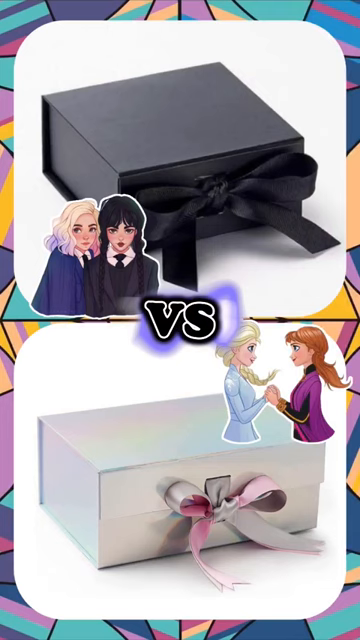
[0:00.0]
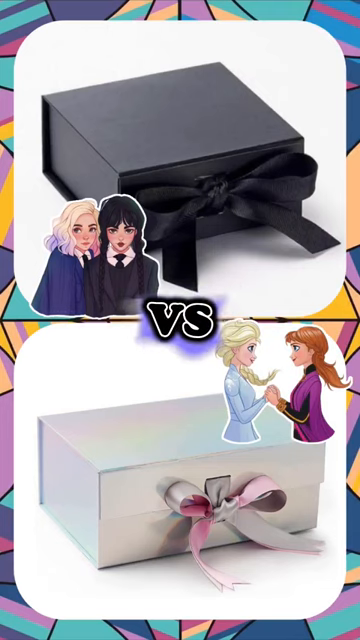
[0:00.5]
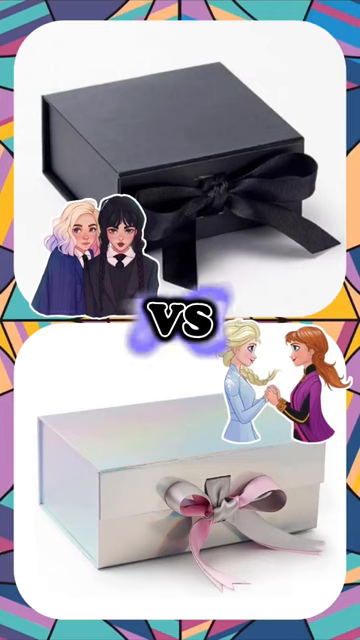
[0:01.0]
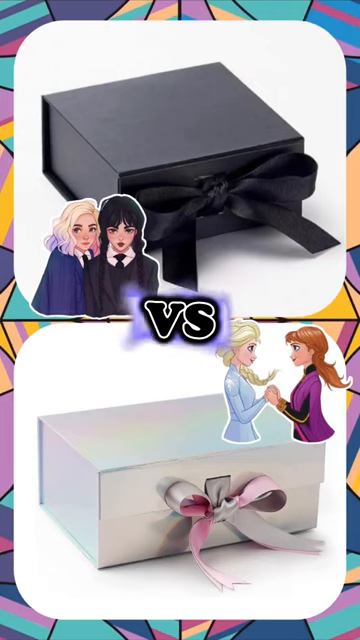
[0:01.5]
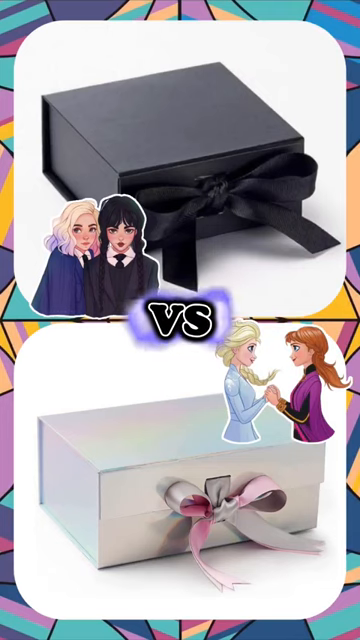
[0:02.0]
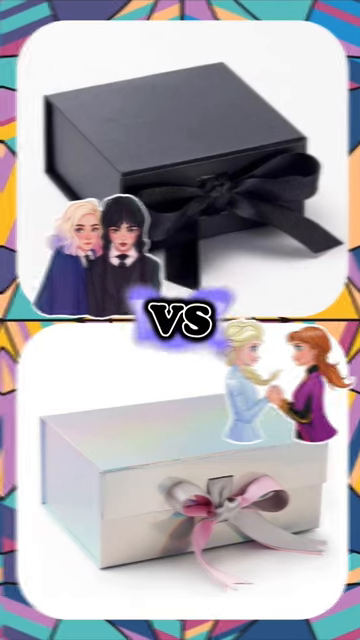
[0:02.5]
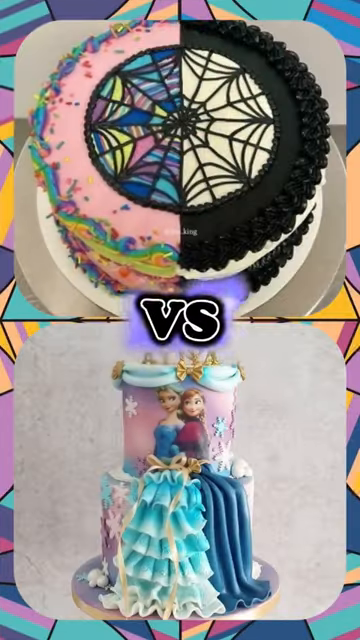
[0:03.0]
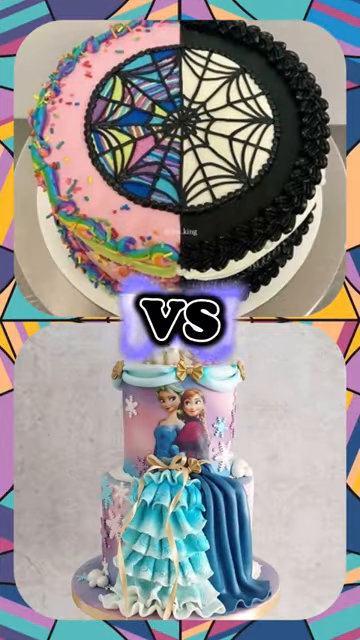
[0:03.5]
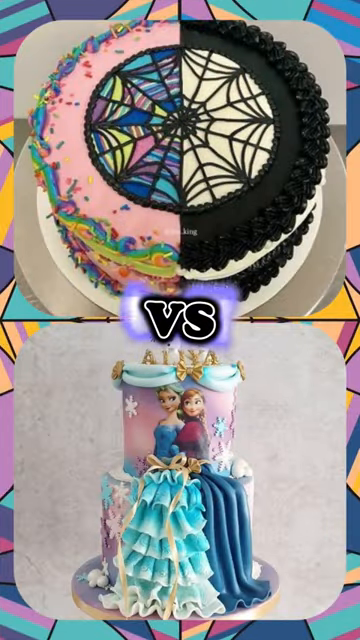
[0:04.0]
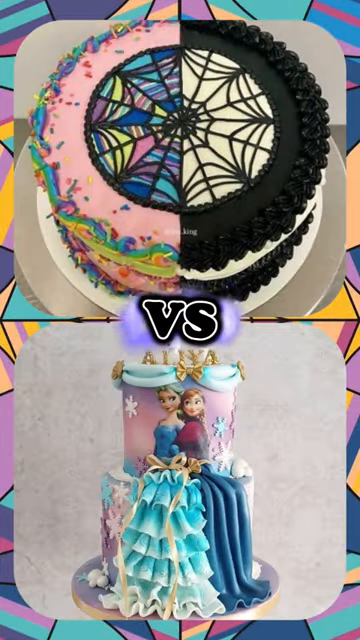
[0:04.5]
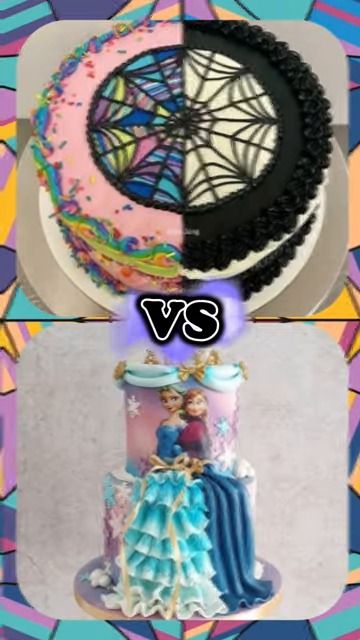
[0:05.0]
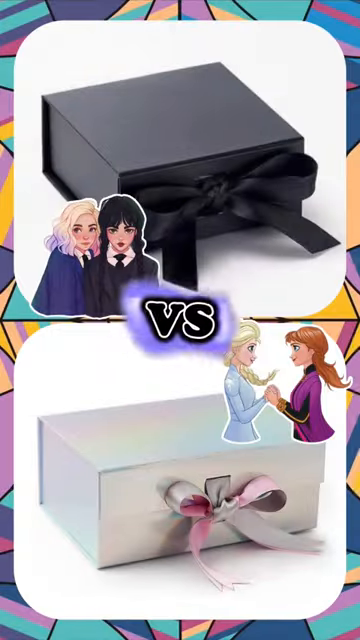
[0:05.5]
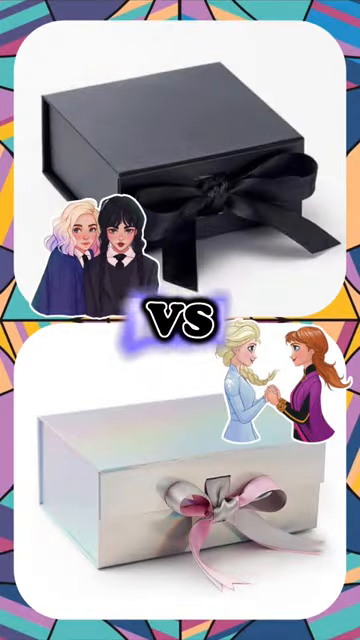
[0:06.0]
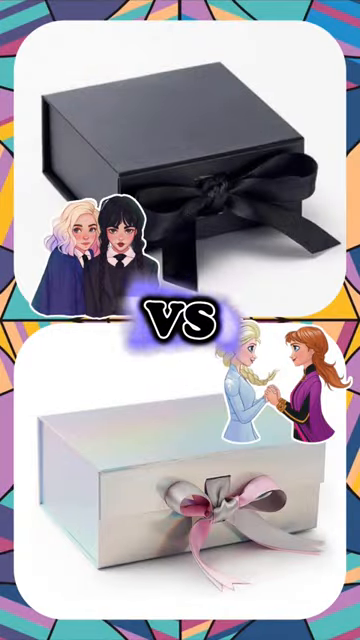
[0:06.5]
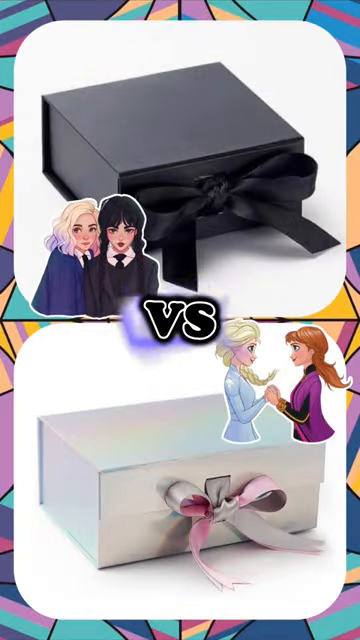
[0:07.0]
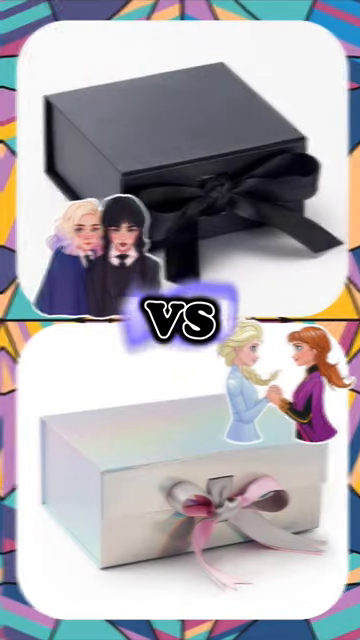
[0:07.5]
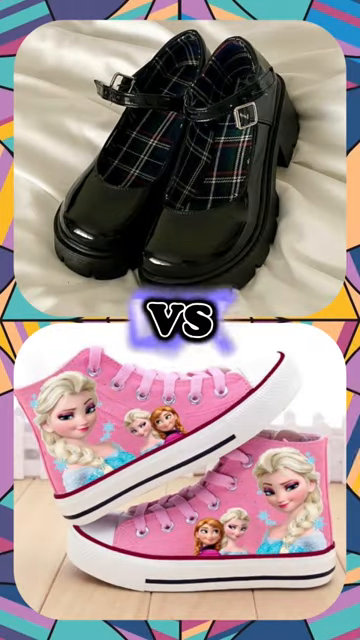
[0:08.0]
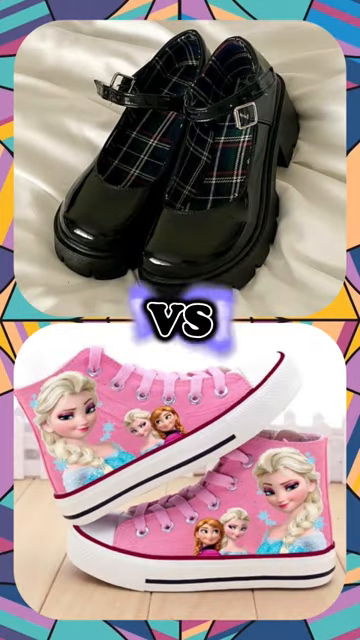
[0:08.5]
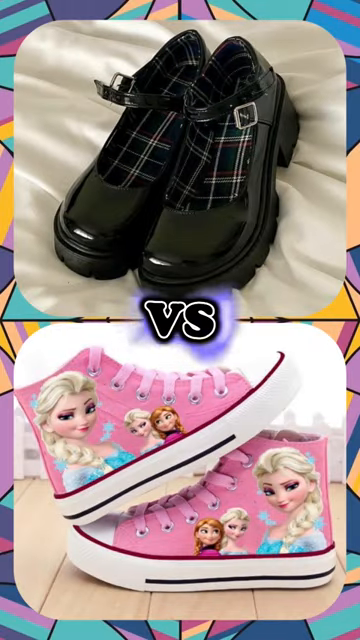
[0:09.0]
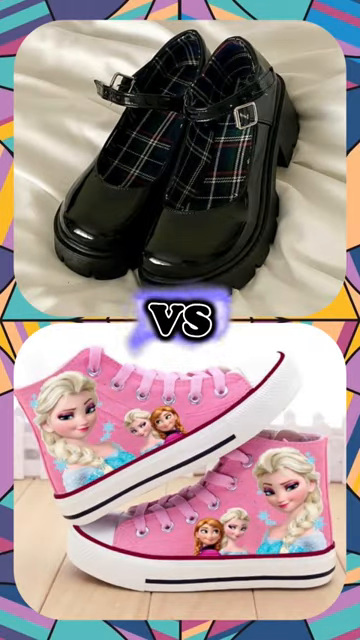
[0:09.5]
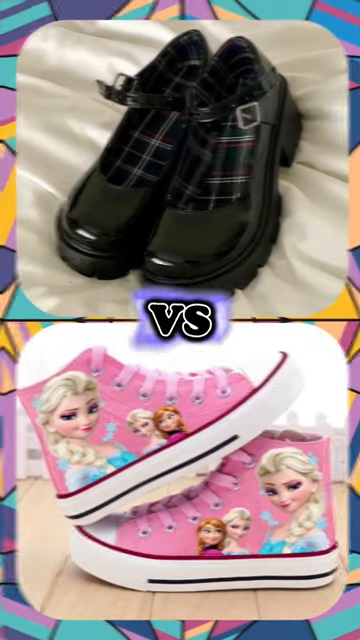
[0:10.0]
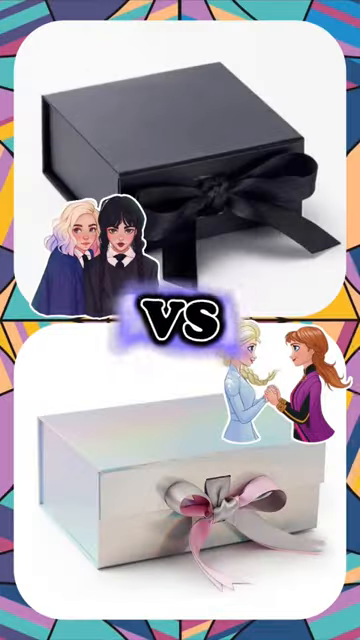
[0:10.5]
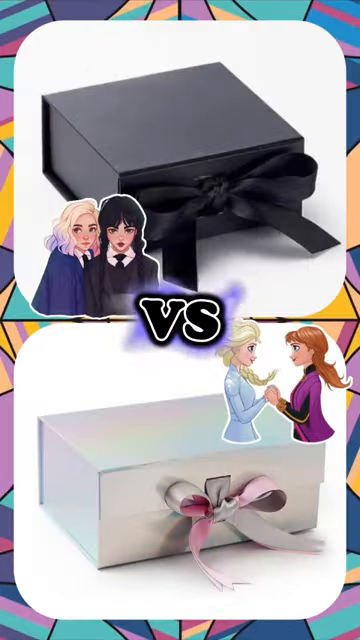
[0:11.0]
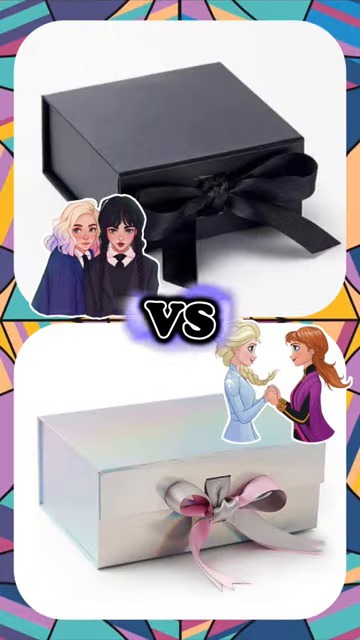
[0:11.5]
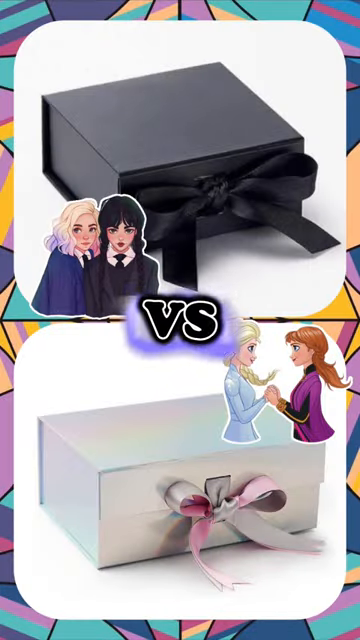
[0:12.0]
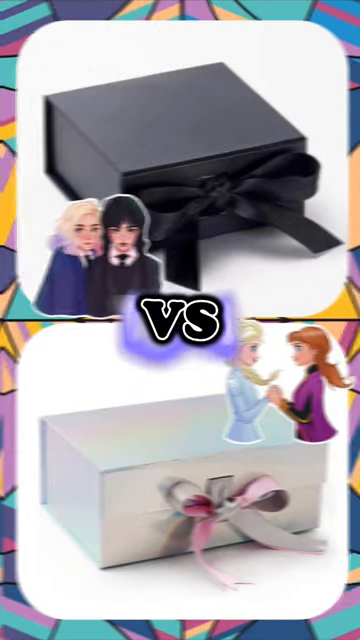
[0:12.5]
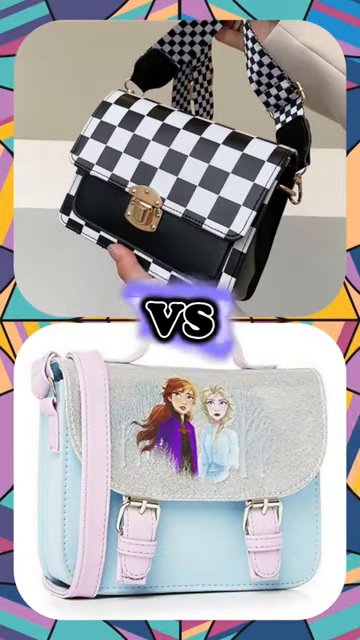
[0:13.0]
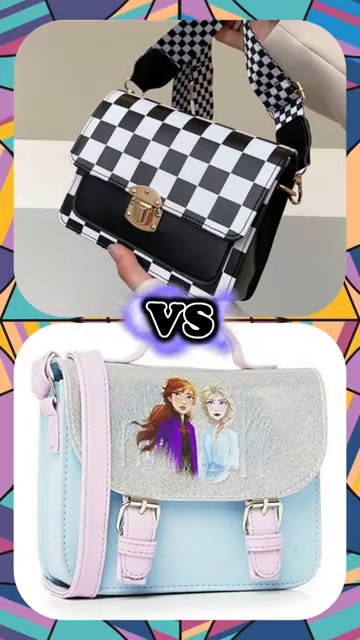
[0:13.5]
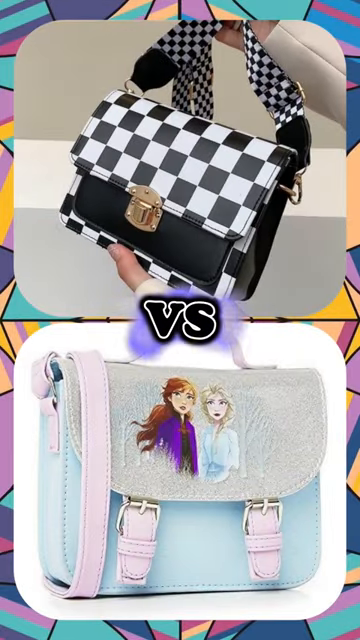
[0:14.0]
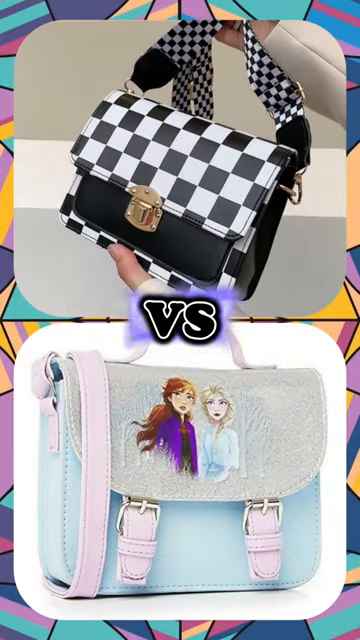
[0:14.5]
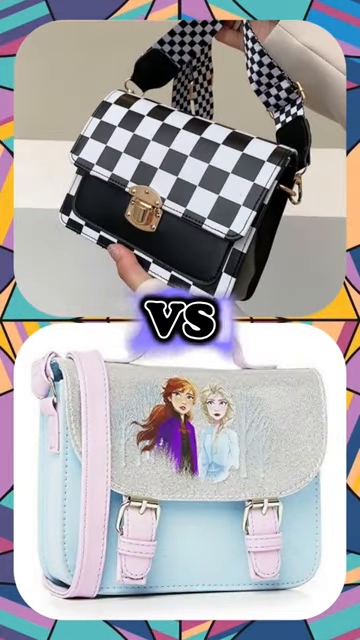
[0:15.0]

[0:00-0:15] The video appears to be some type of game in which two options are presented, one on top and one on the bottom, and the prize behind each option is then revealed. It starts with two images, one above the other: the top image appears to be a black gift box, while the image underneath appears to be a white gift box. The image then switches to show that the top box held a cake, half of it kind of rainbow-colored and half kind of a black and white spider web theme. Underneath is a large tiered cake with an Anna and Elsa from Frozen design on it. The video transitions back to the original images of the black gift box on top and the white gift box on the bottom. The next reveal shows a pair of black shiny Mary Jane shoes on top and a pair of pink Frozen-themed Converse shoes on the bottom. The default gift box images return, with the black gift on top and the white one on the bottom, and then the final scene shows that the top box had a black and white checkered leather purse and the bottom box had a blue and silver Frozen-themed bag with a picture of Anna and Elsa on it. The premise is to pick either the black gift box or the white gift box and see which gift would have hypothetically been won.